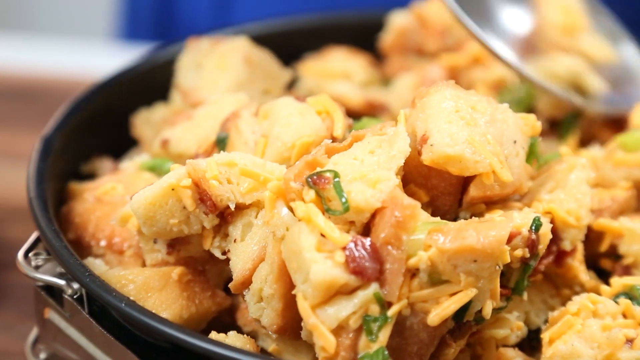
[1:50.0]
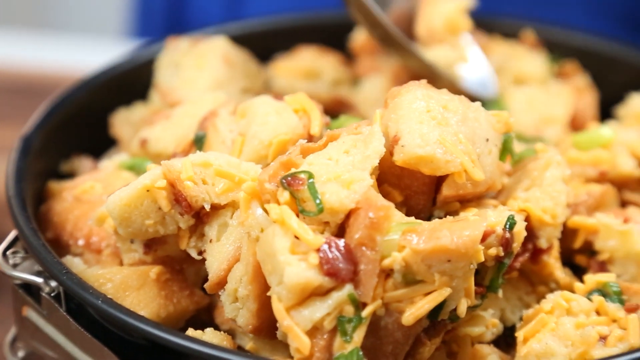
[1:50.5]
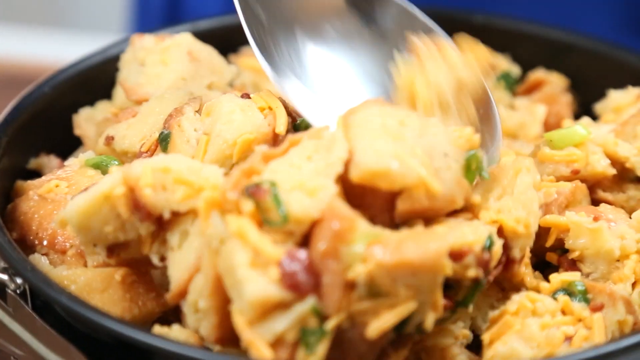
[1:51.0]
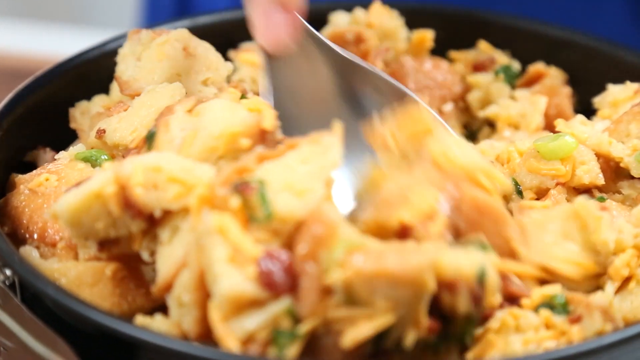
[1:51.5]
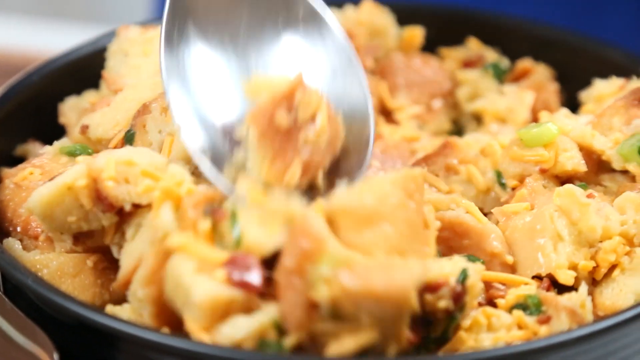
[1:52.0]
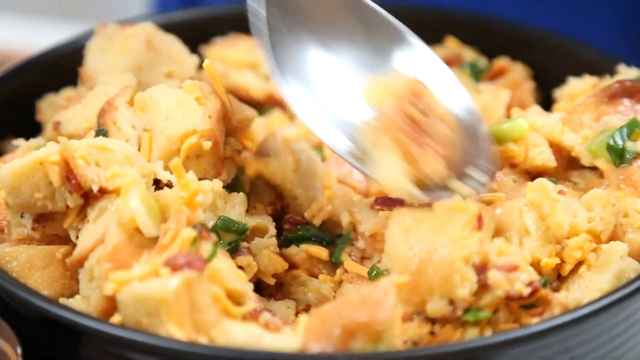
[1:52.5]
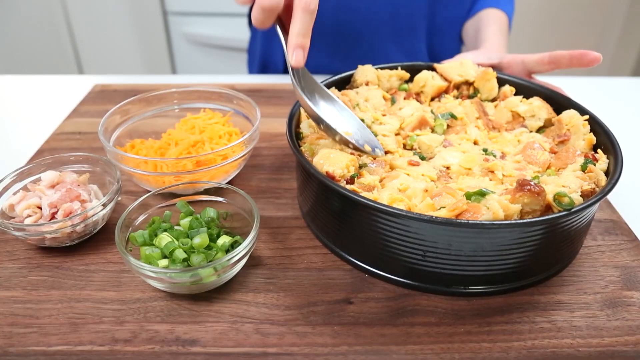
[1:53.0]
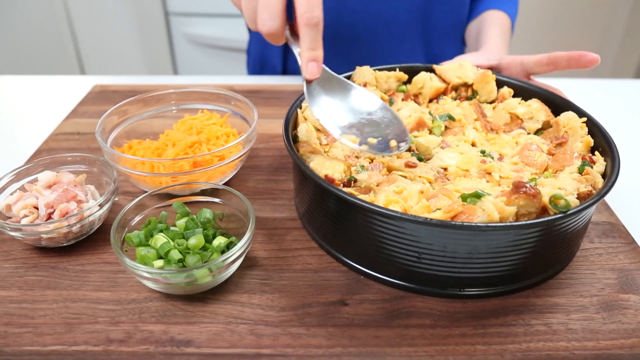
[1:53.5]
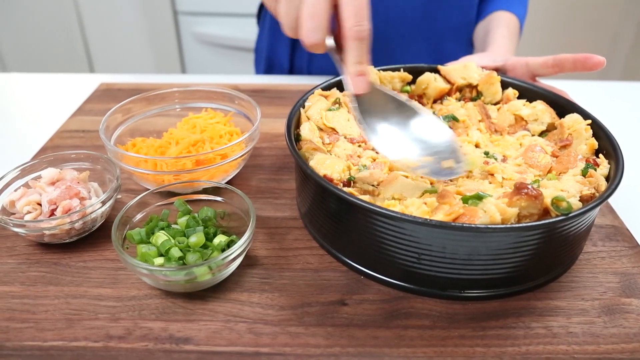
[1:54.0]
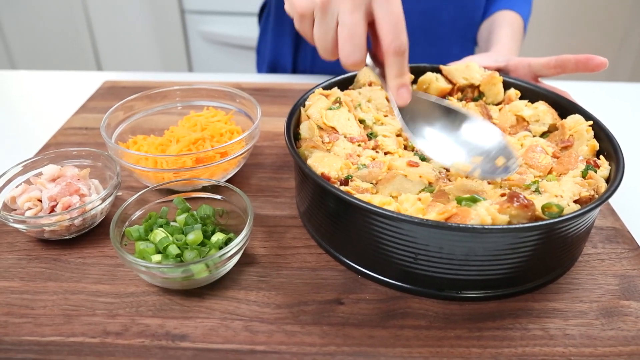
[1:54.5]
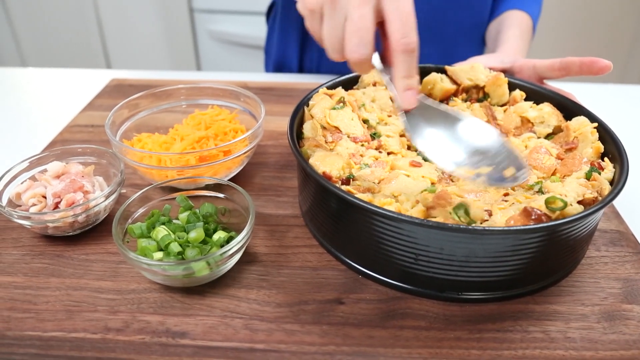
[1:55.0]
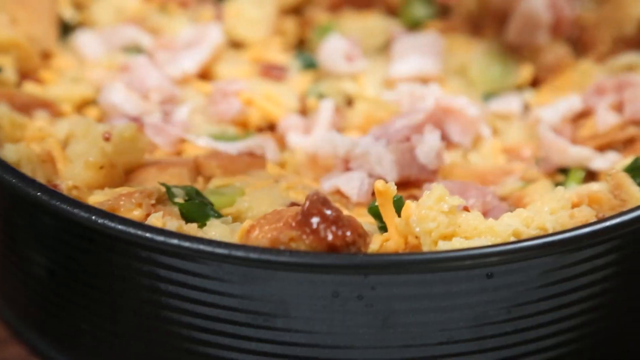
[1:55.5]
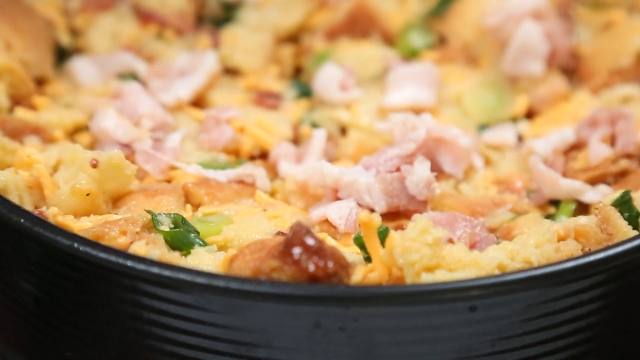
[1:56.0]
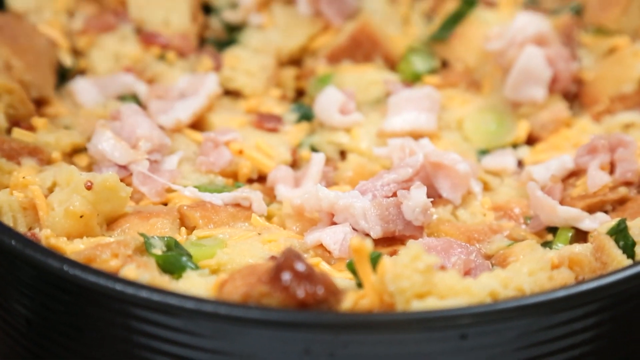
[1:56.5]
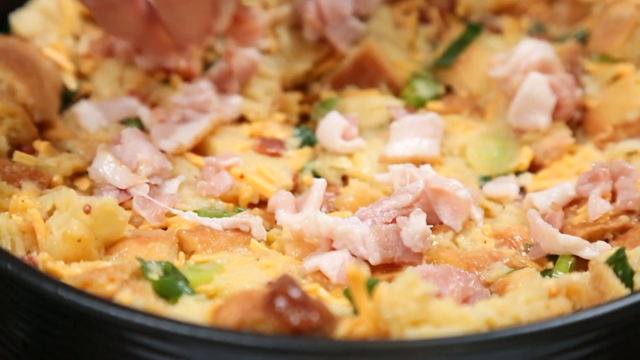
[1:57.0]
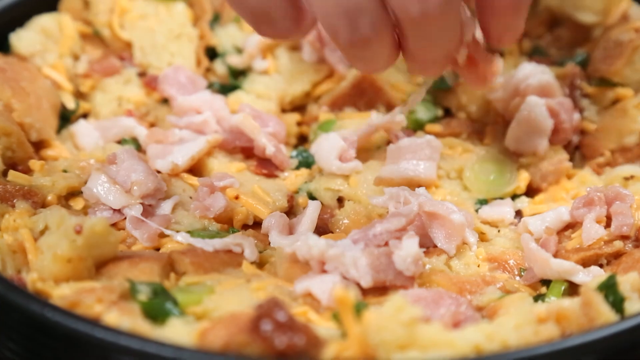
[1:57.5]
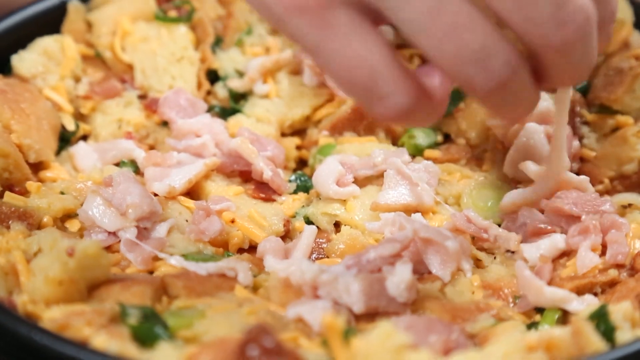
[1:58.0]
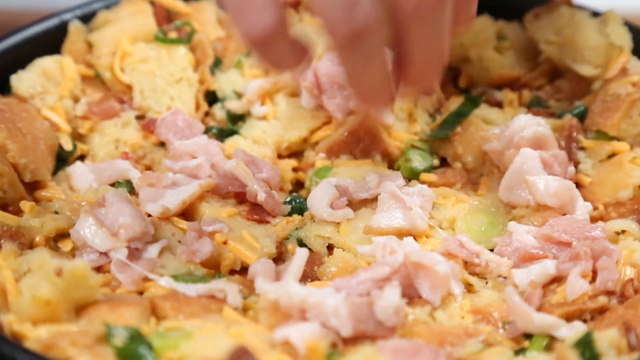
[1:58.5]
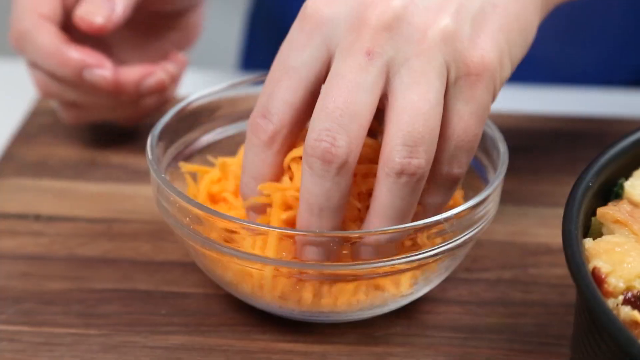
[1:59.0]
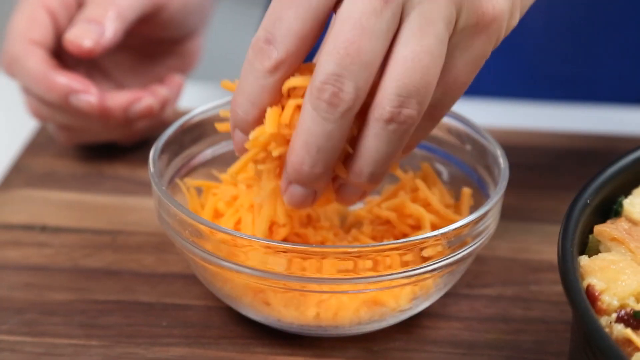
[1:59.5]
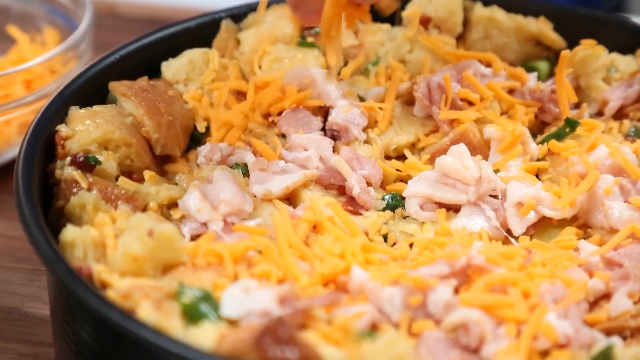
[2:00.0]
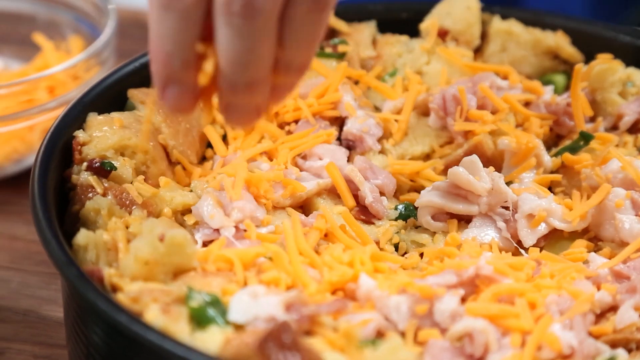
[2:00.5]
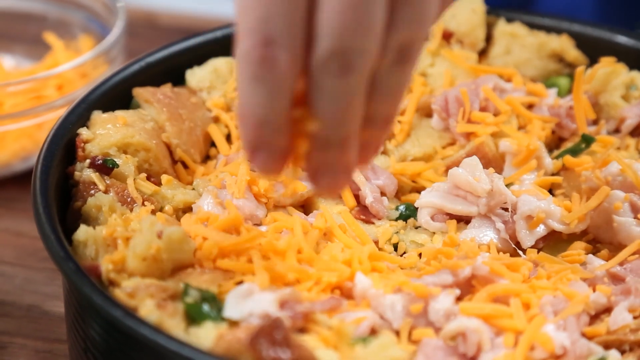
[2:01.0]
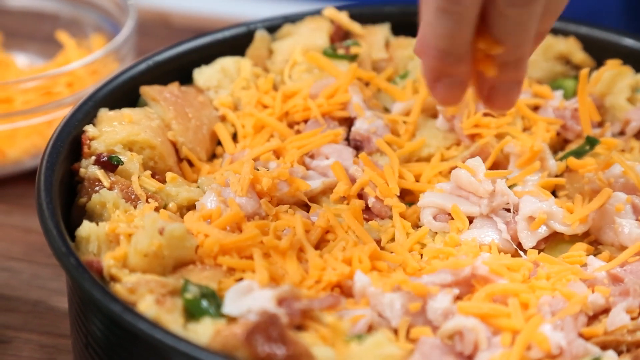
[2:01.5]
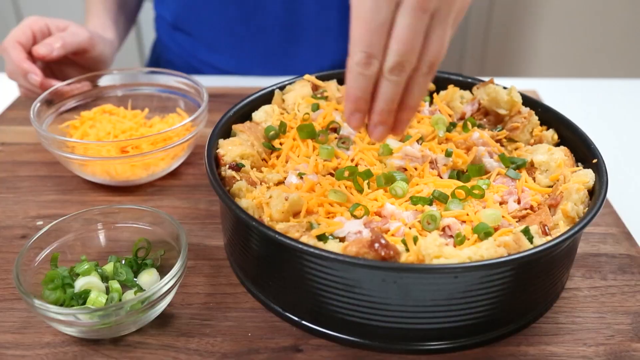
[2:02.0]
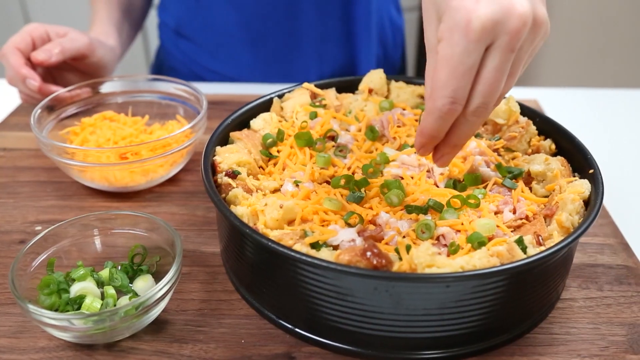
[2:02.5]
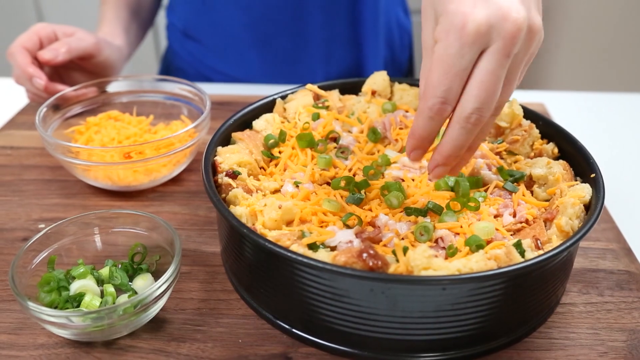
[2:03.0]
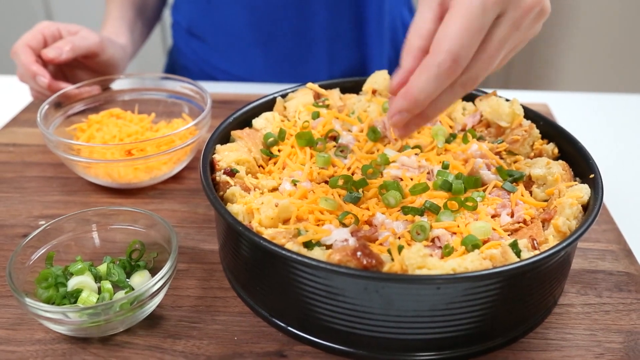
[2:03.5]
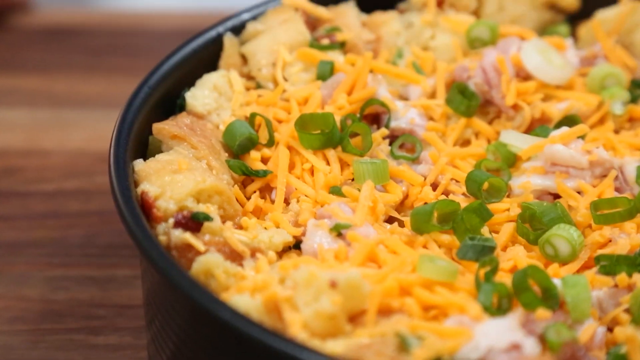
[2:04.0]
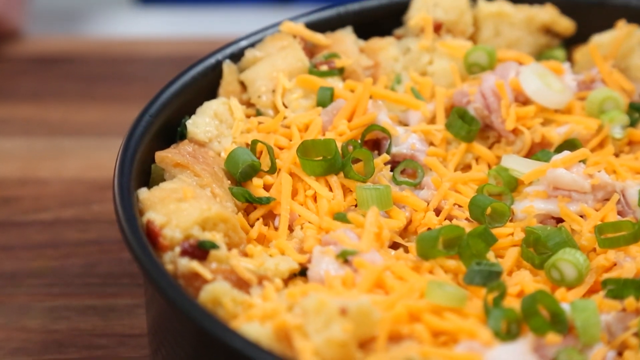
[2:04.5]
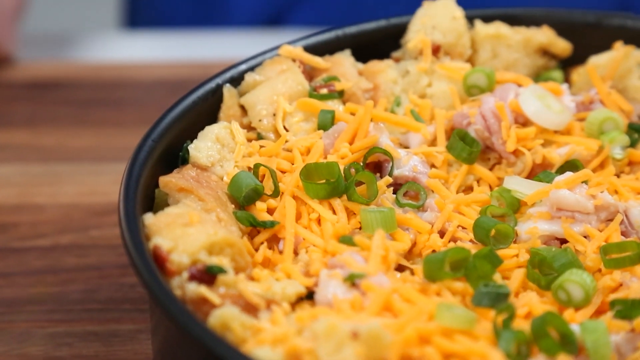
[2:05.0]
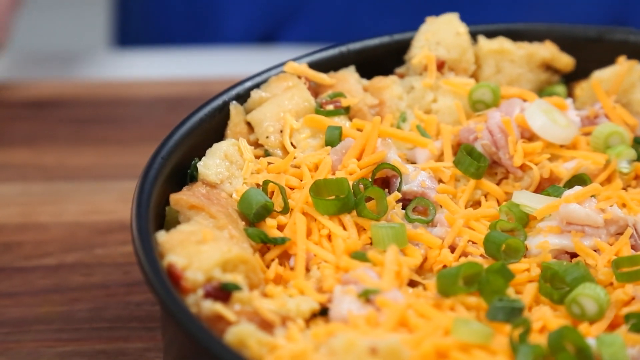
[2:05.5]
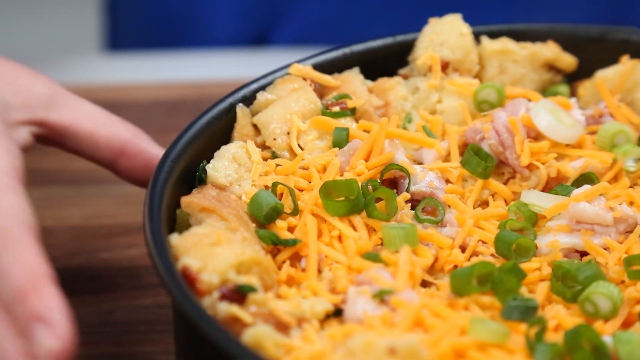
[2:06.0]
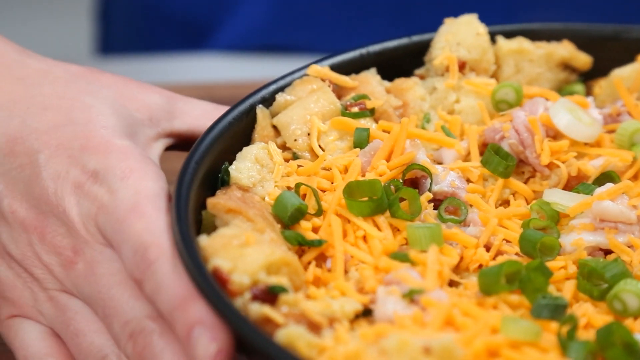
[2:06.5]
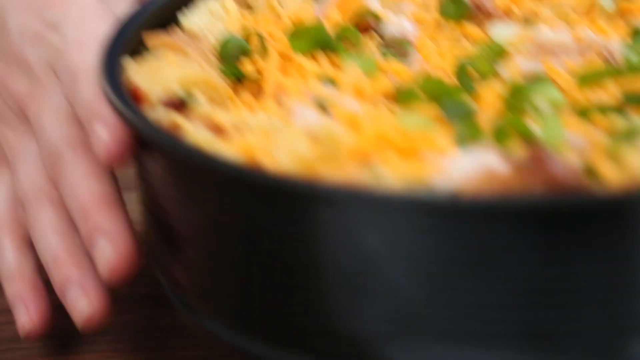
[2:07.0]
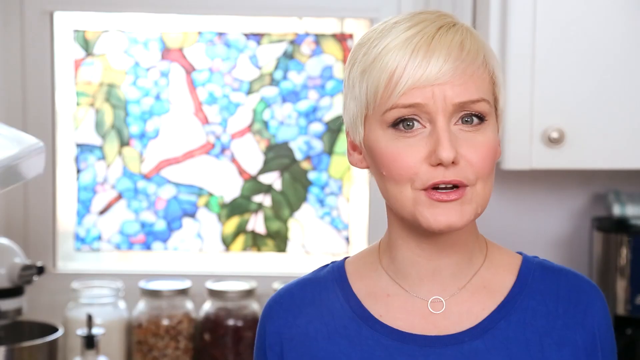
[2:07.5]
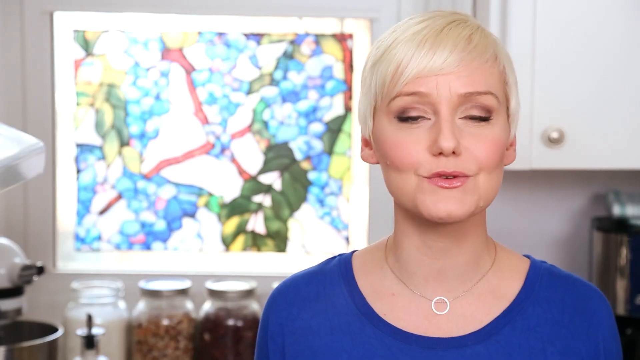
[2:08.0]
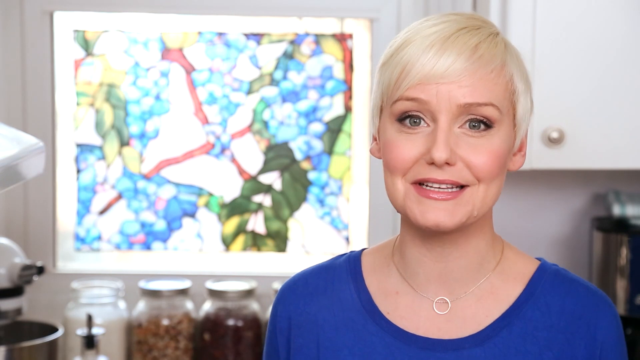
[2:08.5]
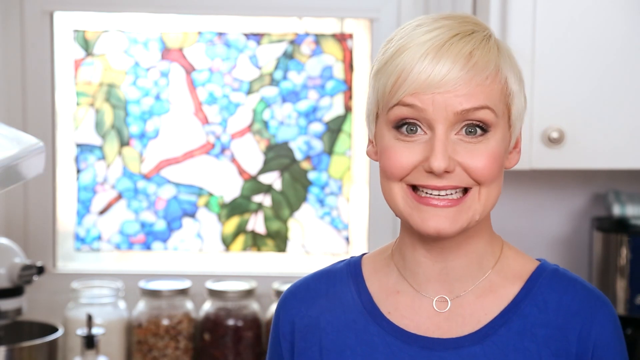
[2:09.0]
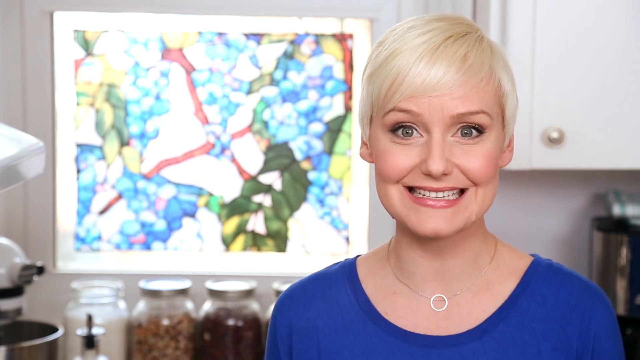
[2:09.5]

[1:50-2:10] A black baking pan is filled with kind of cubed pieces of bread, some bacon, cheese and some chives. A hand over the top places raw bacon onto the mixture, mostly in the center. A hand then reaches into a small glass bowl of bright orange shredded cheese, which is on kind of a wooden cutting board, and the cheese is distributed evenly over the top of the mixture, followed by chives. It looks like some type of quiche, more bread-based than egg-based. A close-up angle shows about half of the quiche in the circular black pan, and a hand reaches over and picks it up. Then the woman with blonde hair, in her mid to late 30s, speaks in the kitchen setting with the stained glass window behind her.